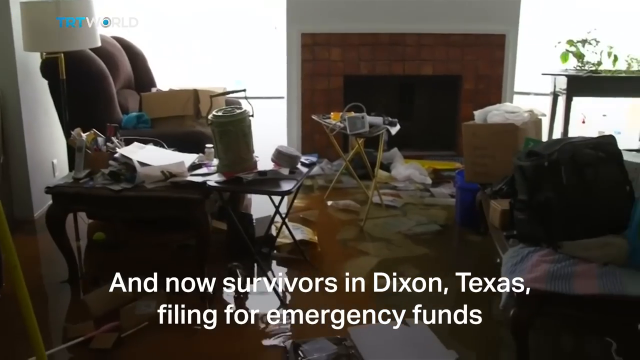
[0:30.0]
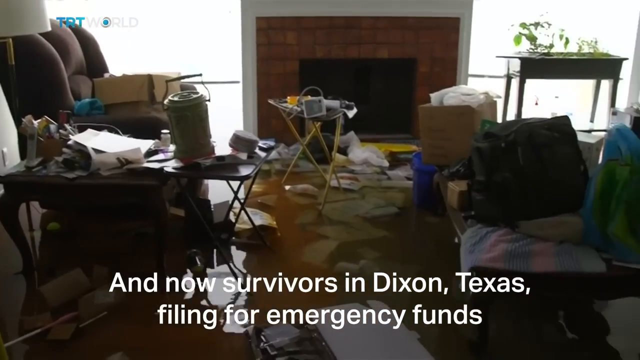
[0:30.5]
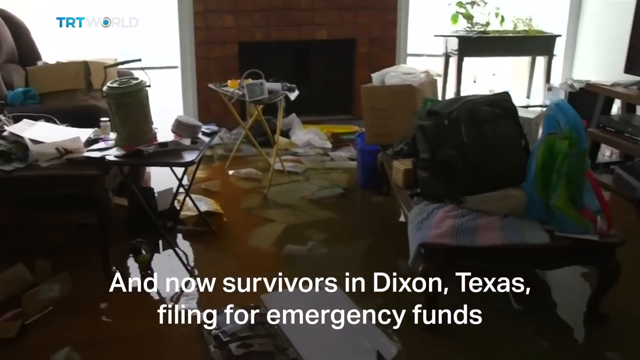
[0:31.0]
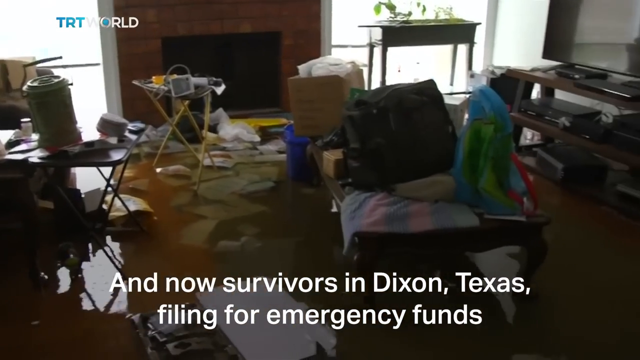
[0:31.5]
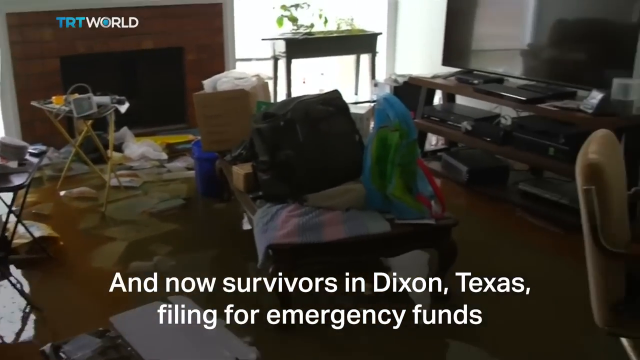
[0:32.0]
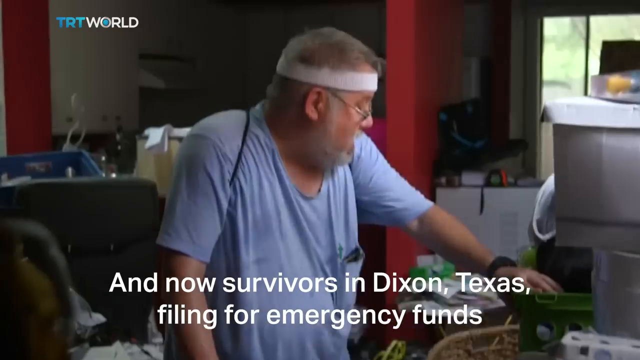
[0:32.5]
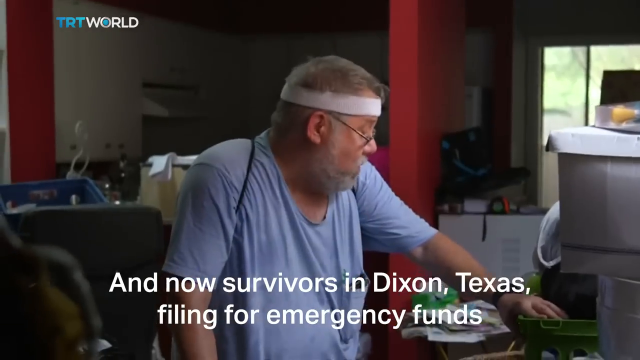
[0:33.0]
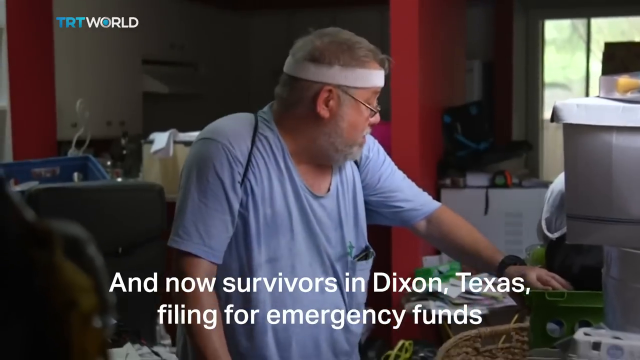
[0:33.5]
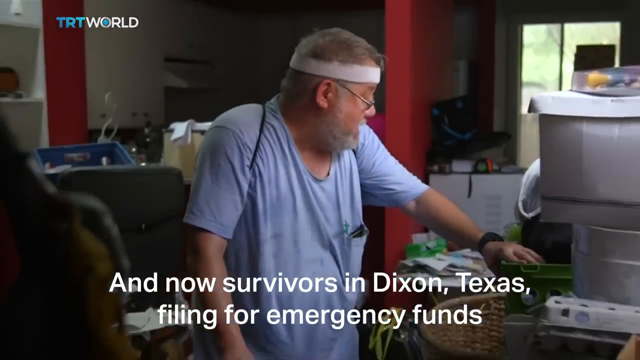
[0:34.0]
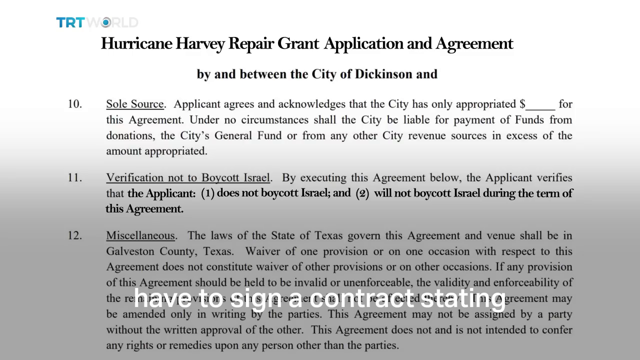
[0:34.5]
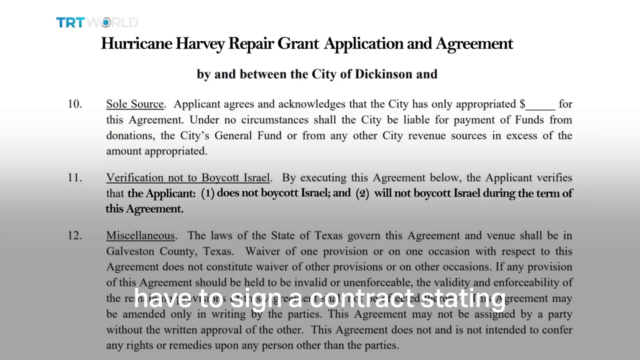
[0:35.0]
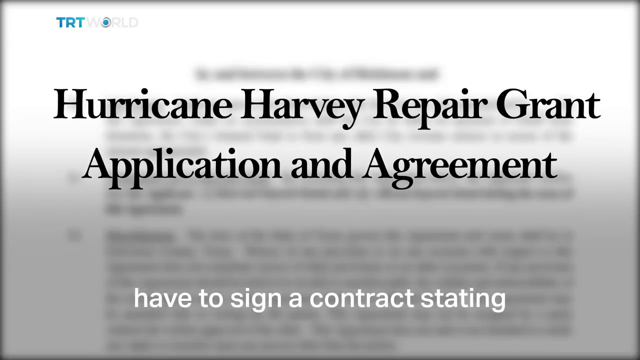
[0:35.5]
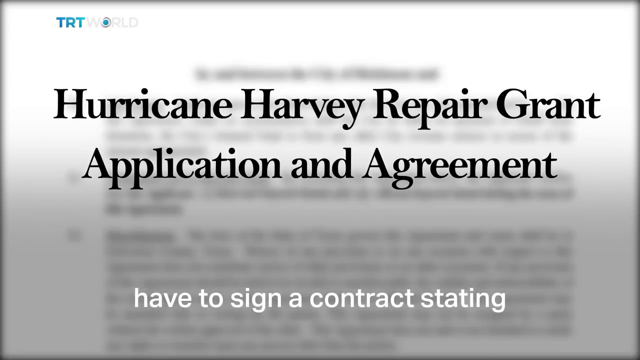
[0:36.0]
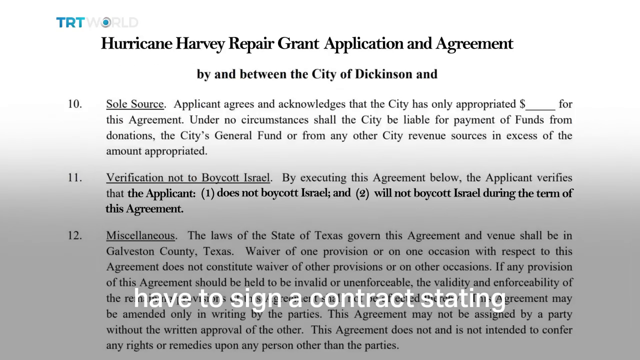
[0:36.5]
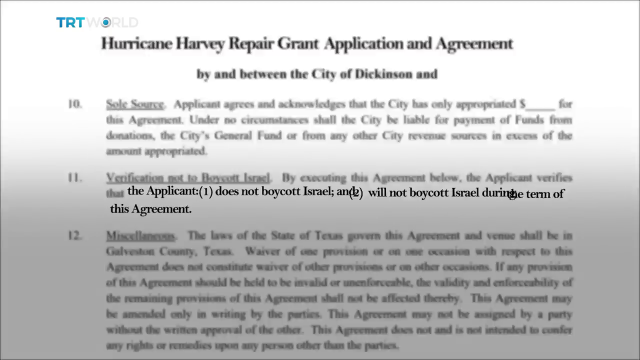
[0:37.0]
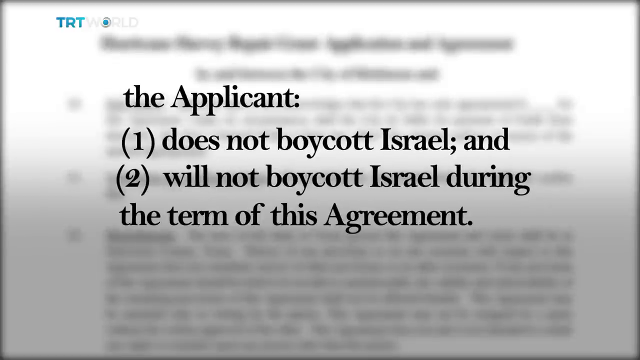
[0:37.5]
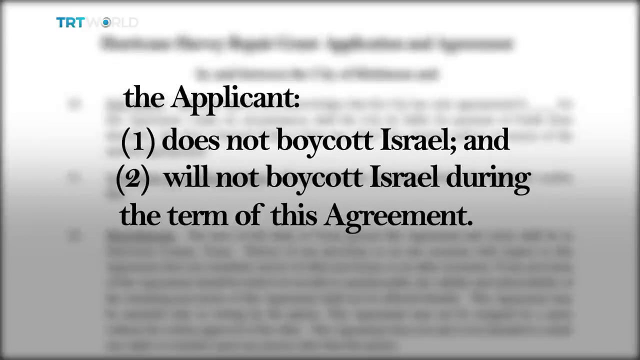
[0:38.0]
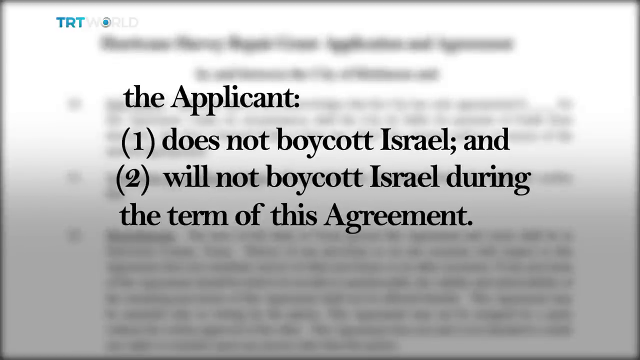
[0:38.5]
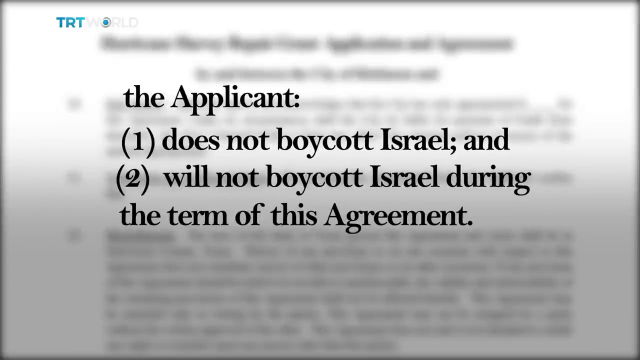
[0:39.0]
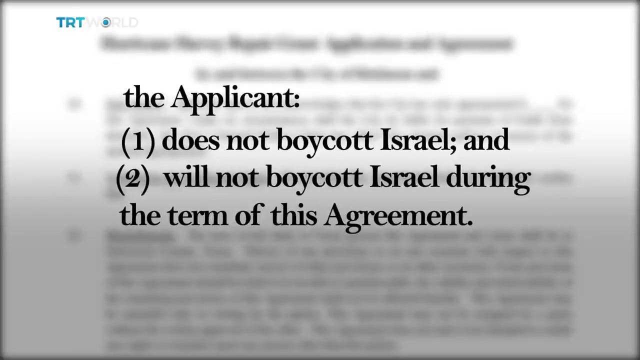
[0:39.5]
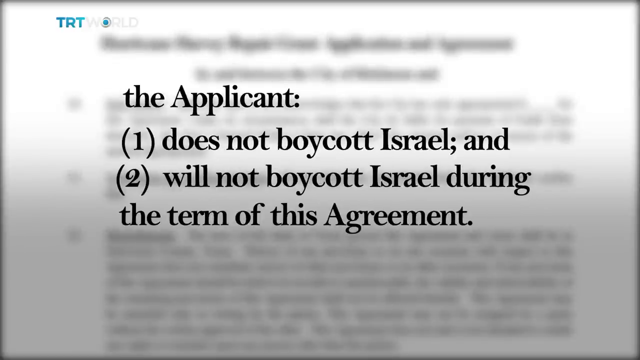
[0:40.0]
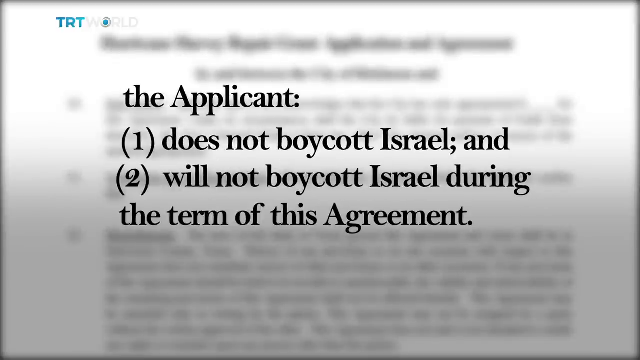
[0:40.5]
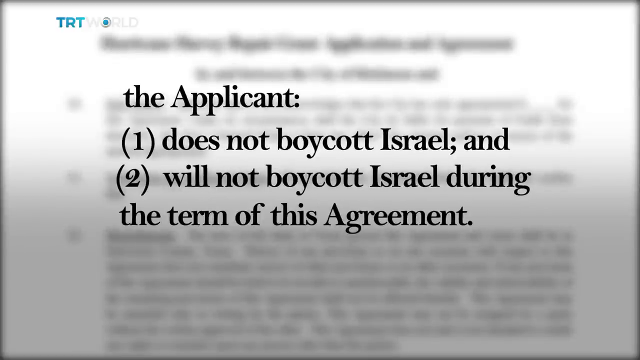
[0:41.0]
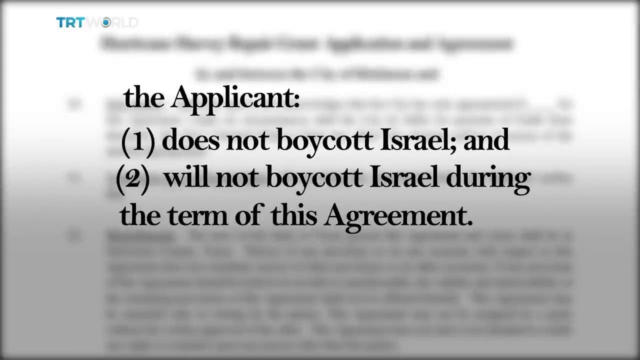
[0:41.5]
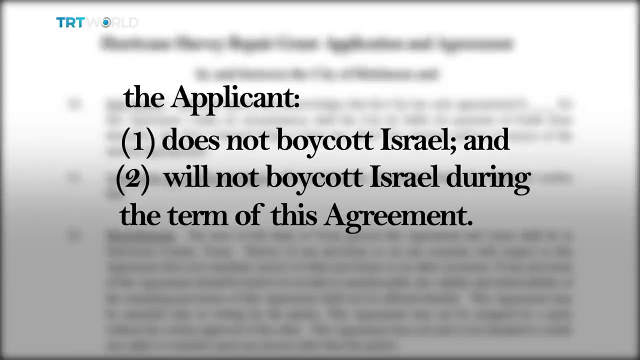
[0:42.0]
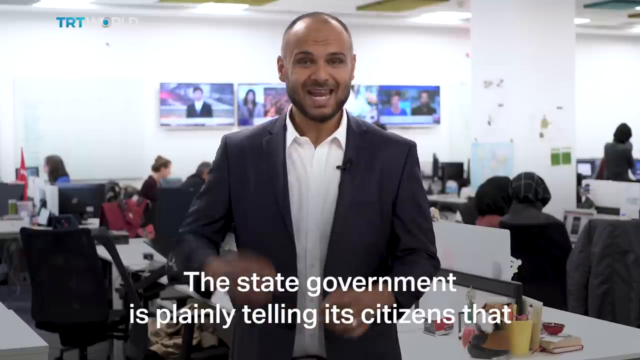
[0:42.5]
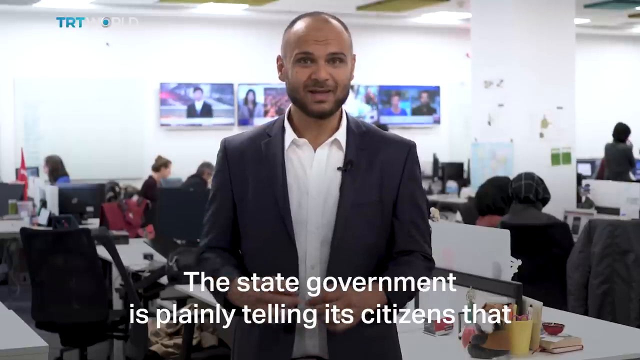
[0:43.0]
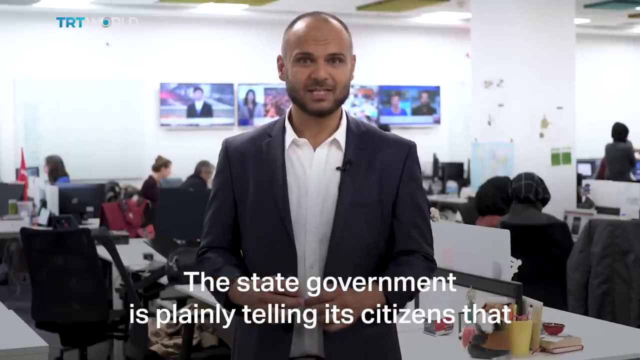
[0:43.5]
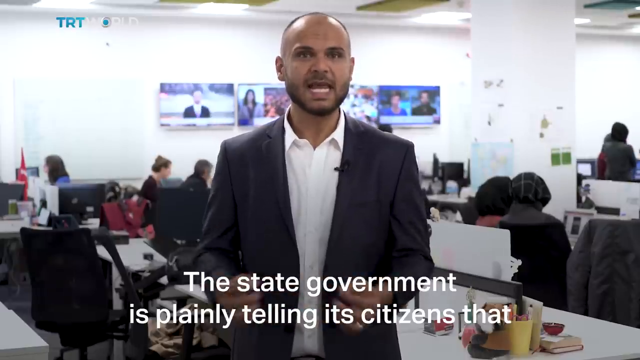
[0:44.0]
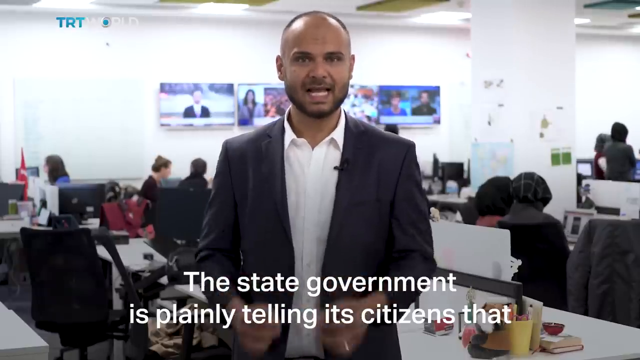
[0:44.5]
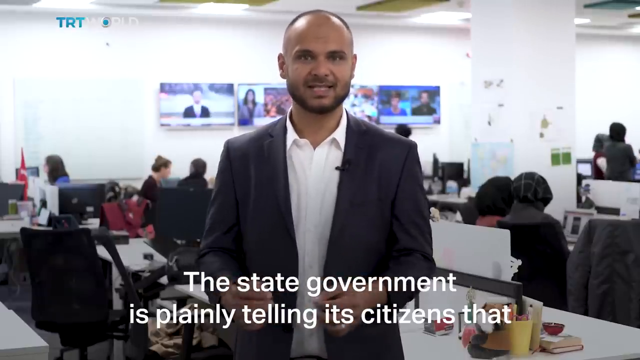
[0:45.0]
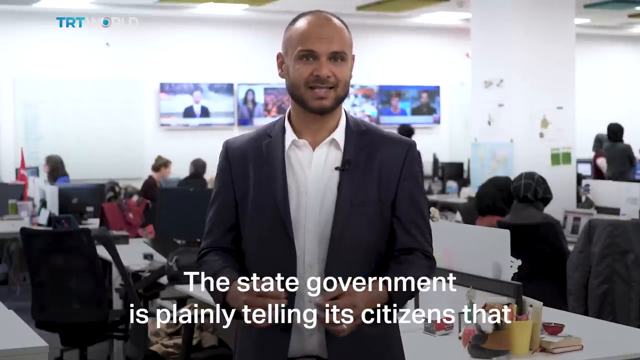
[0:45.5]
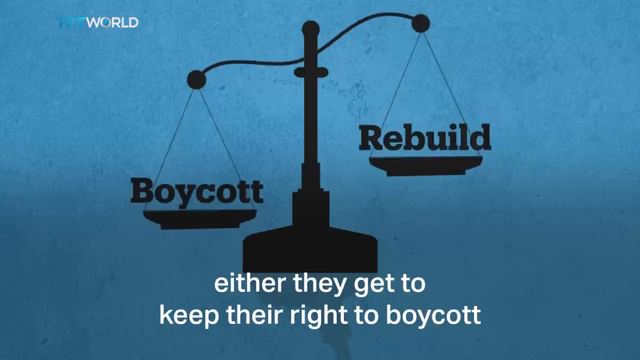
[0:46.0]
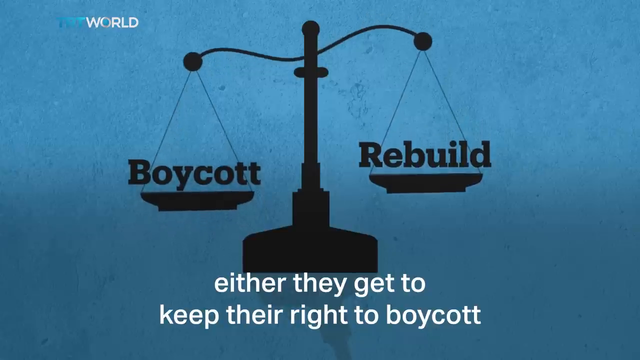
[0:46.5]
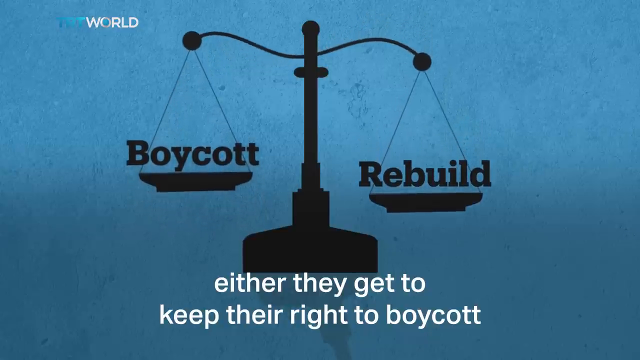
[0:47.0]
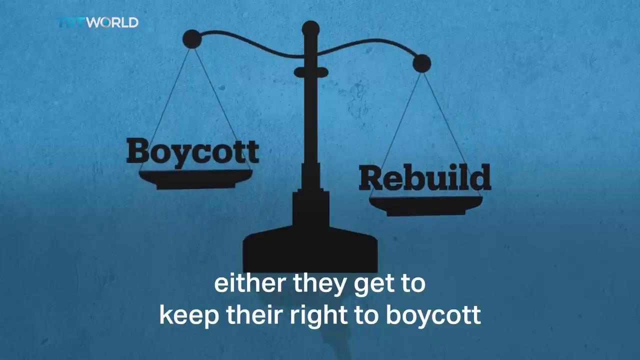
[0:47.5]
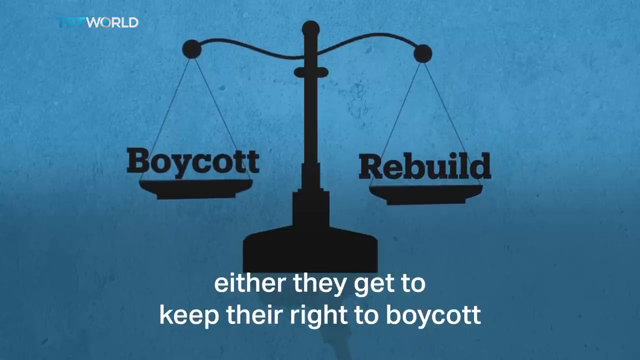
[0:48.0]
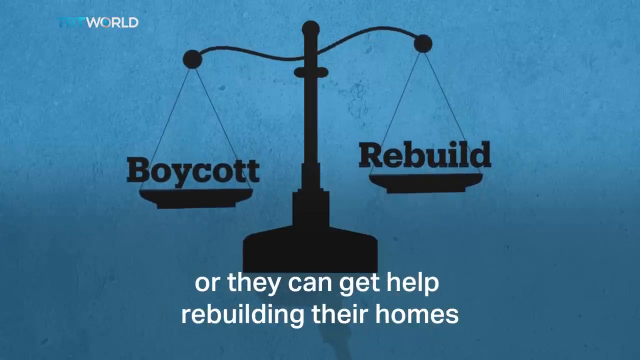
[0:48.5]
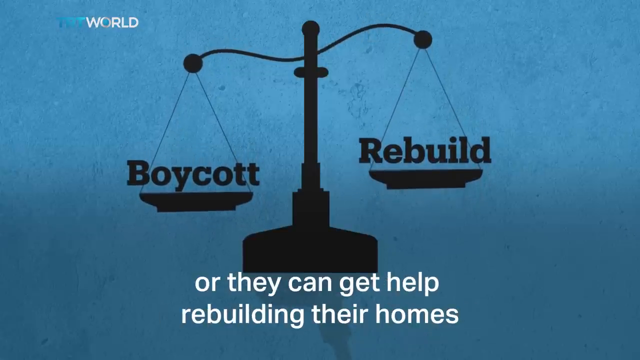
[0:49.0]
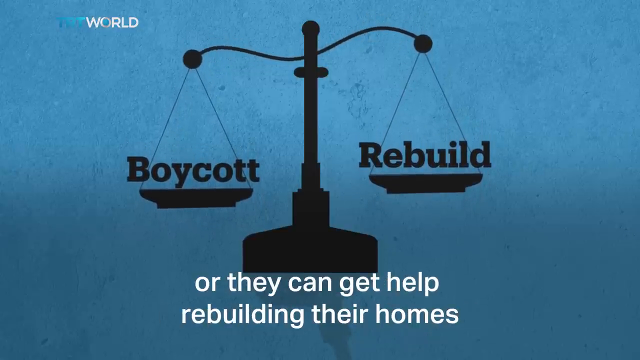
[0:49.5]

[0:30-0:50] A living room is submerged in water: papers are everywhere on the floor in the water, the seats are half submerged, and a few other things are on the floor under water. The caption reads, "now survivors in Dickson, Texas filing for emergency funds." The camera shows a man wearing a light blue shirt, a hair band around his head and glasses, and shows how his whole house has been affected. A document titled "Hurricane Harvey Repair Grant Application and Agreement" appears; the title is zoomed out, and a section states that the applicant "one does not boycott Israel and two will not boycott Israel during the term of this agreement." The message is that the state government is plainly telling its citizens that they either get to keep their right to boycott or get help rebuilding their homes.